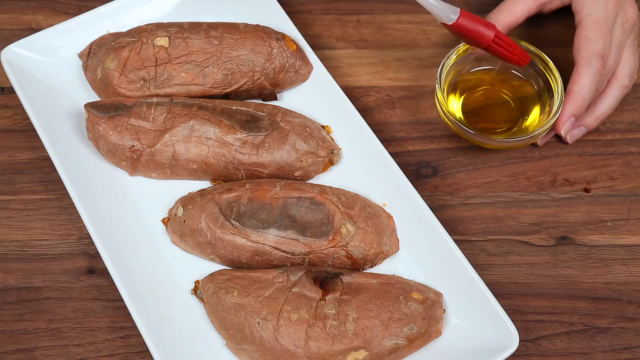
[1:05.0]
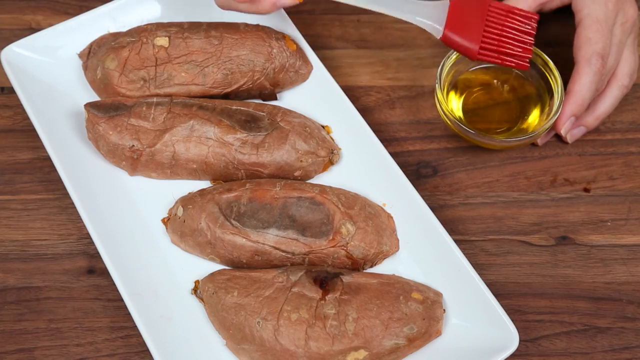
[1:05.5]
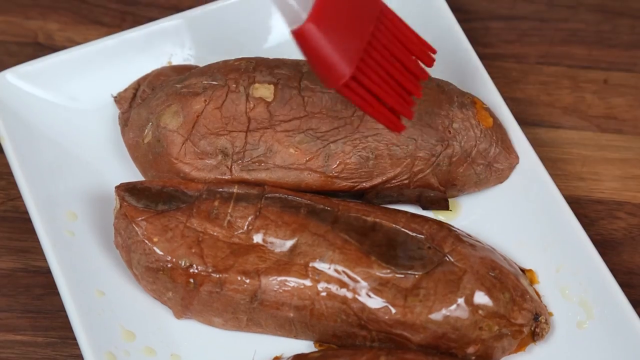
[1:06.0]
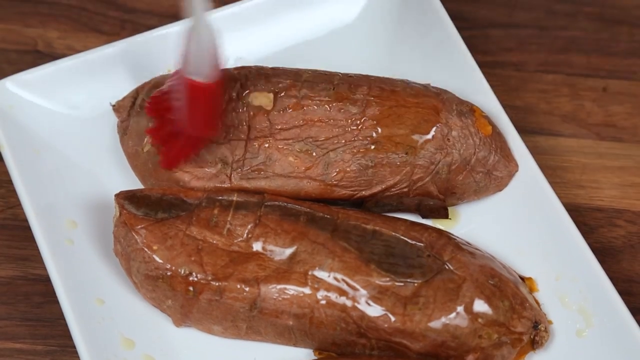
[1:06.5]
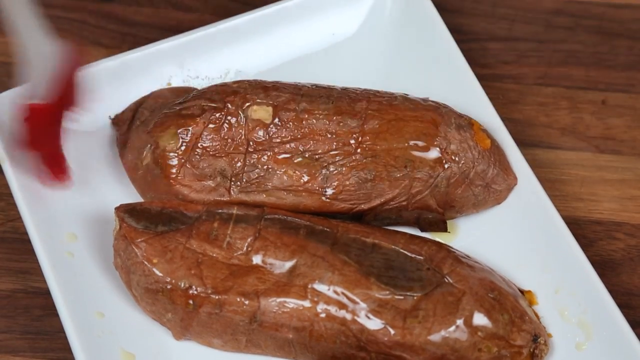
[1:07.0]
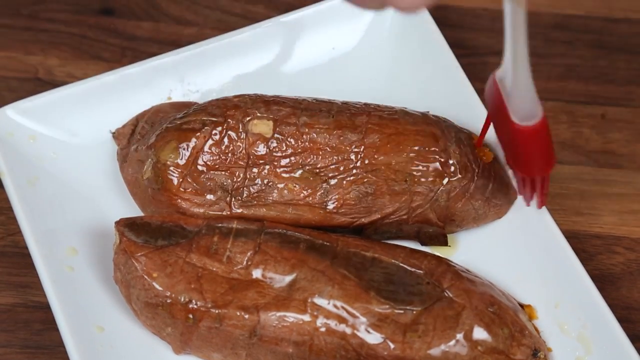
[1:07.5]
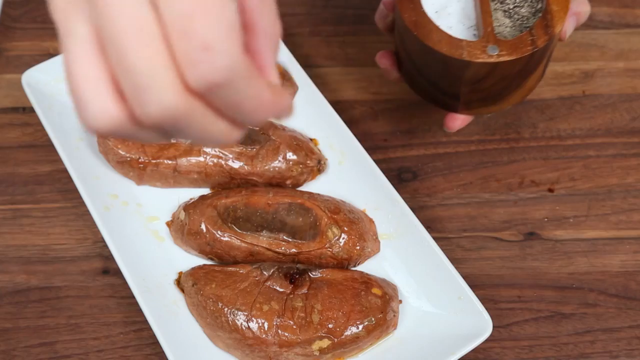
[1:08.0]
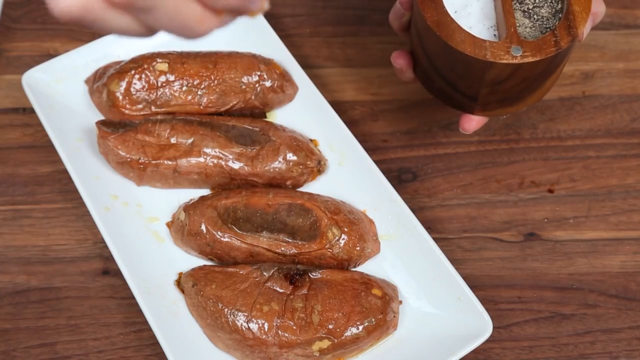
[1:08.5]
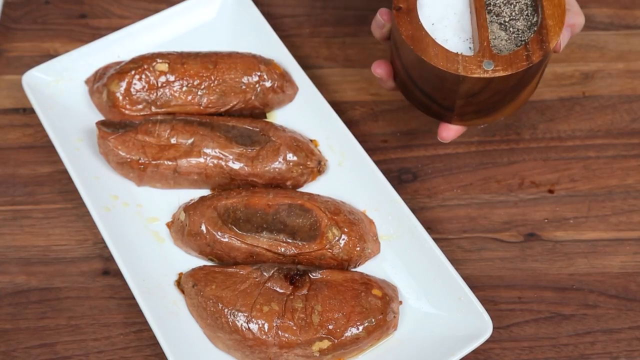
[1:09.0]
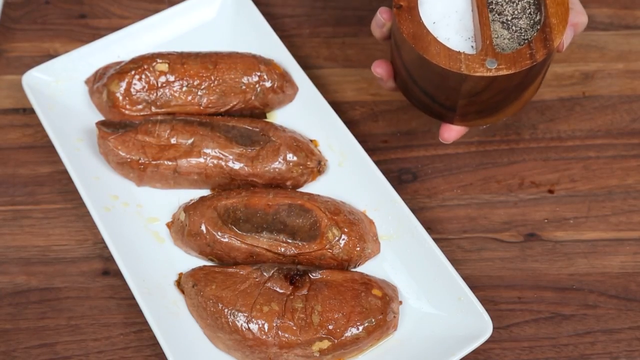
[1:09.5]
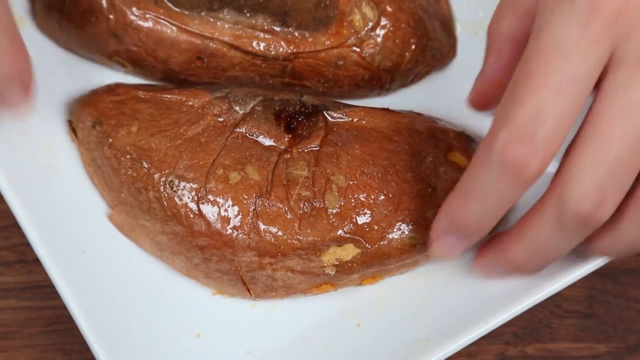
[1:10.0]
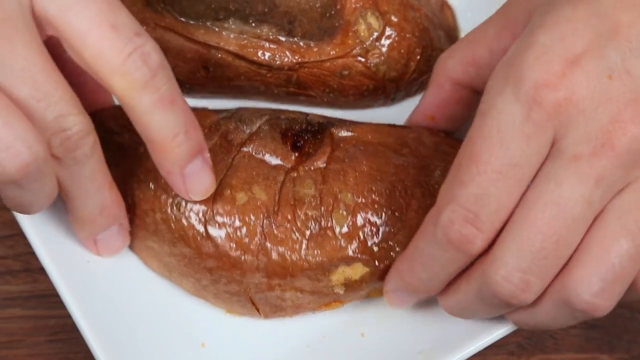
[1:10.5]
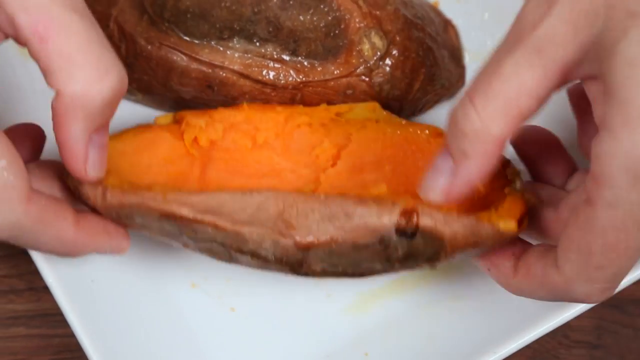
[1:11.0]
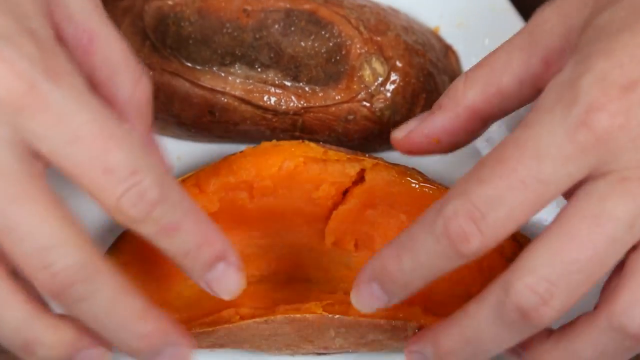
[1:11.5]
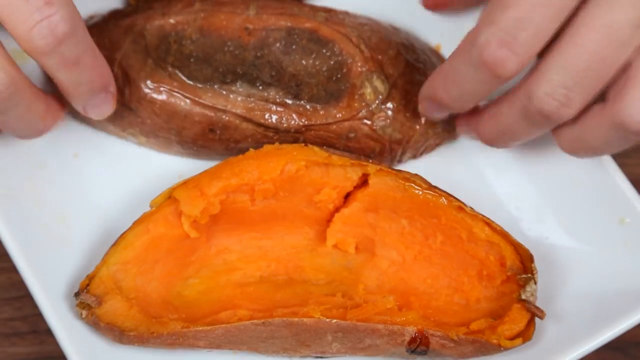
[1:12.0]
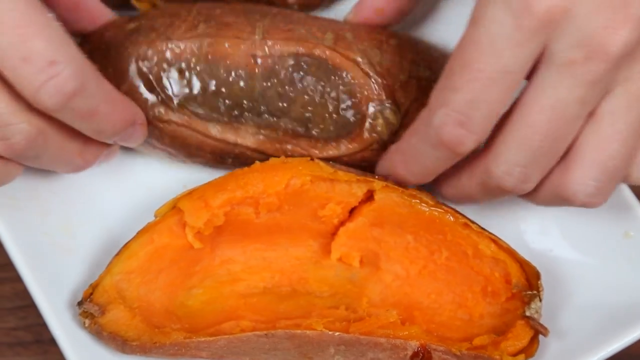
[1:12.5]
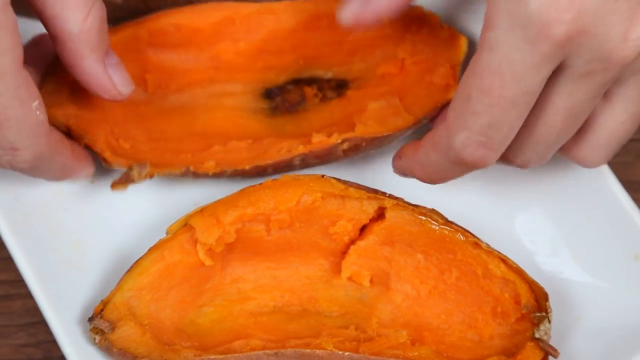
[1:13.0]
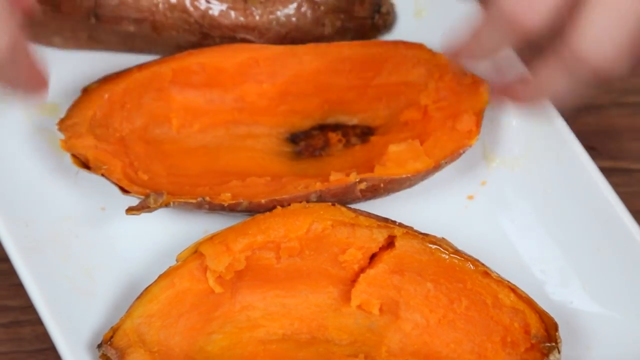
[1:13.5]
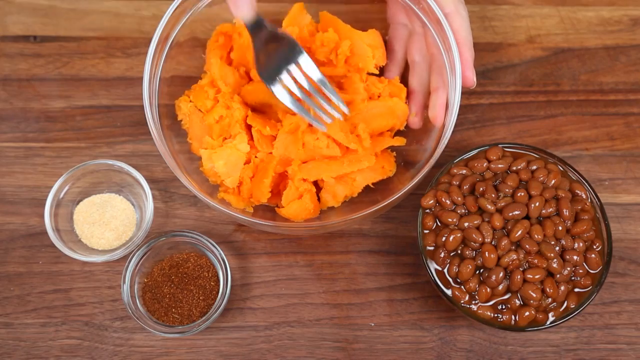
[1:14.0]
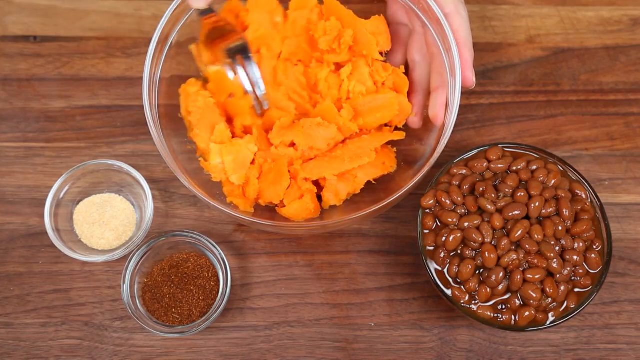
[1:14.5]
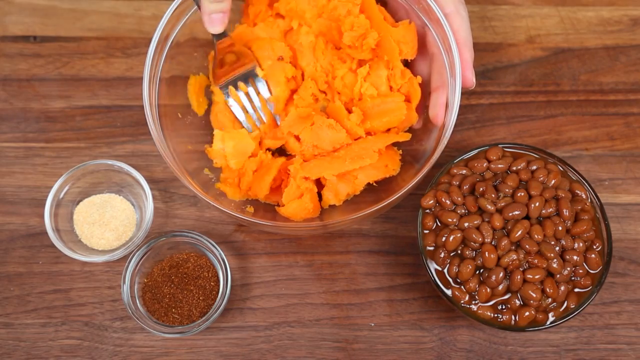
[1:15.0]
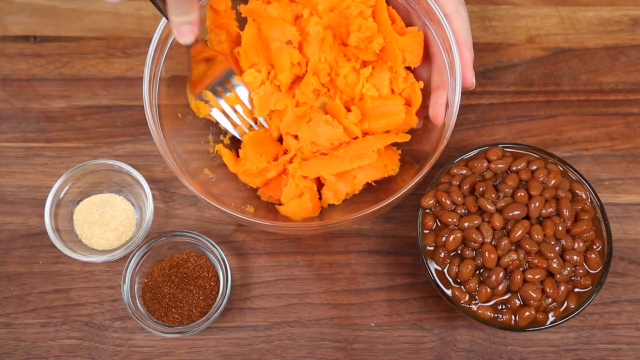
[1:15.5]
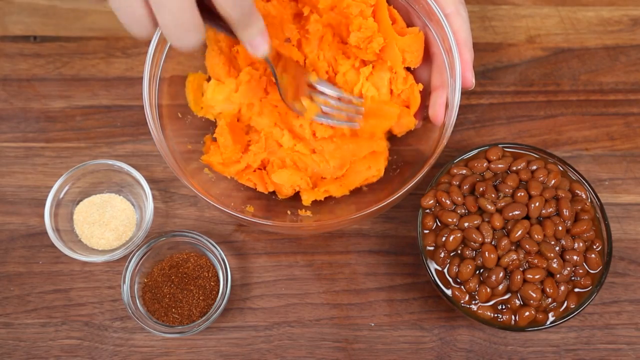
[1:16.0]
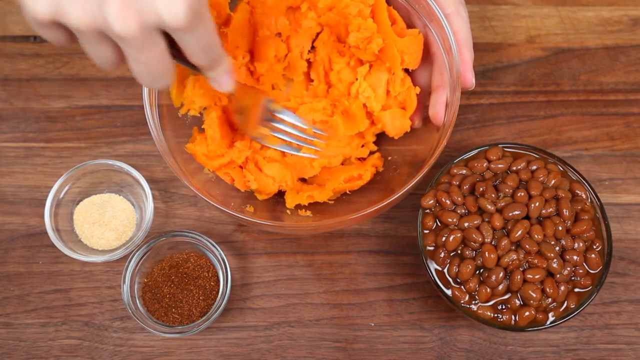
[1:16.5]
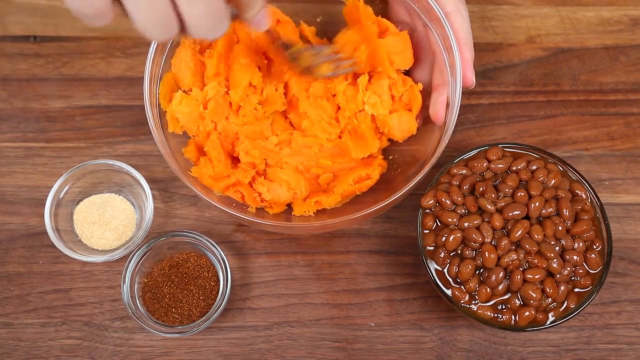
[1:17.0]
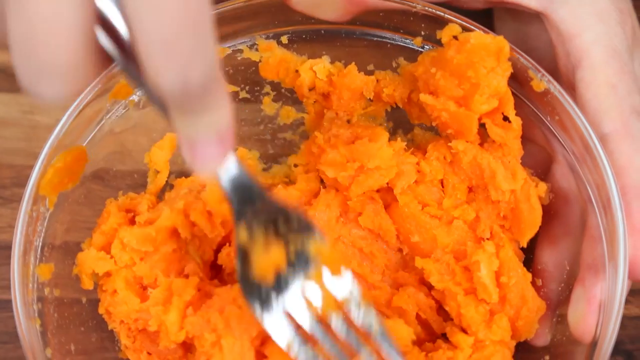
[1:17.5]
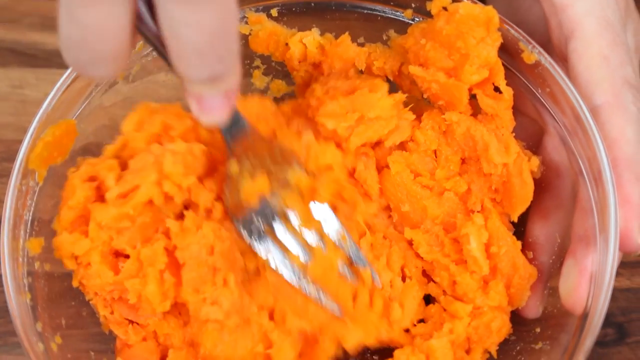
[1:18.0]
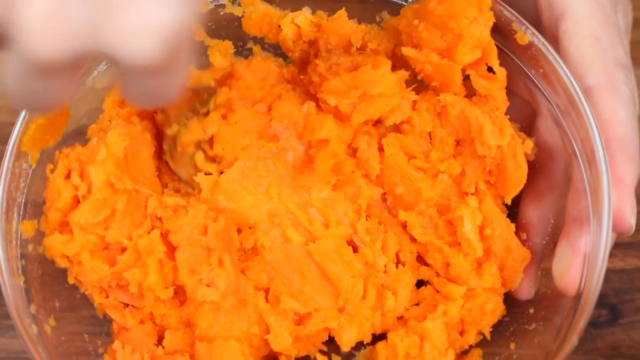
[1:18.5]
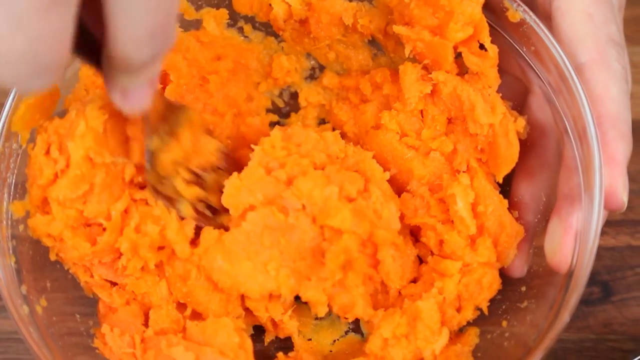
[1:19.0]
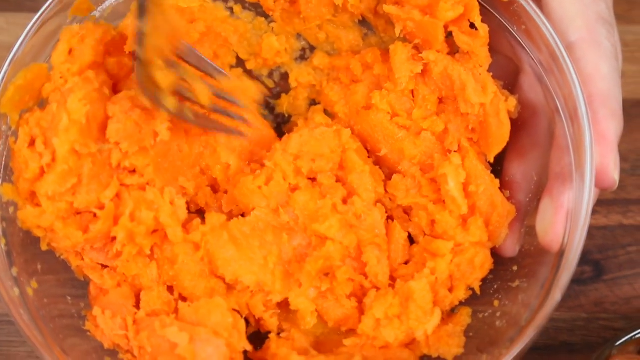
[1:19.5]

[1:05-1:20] The woman appears to be using a cooking paintbrush with a red tip and a white handle, dipping it into a small bowl with some sort of oil. In the middle is a white plate with four sweet potatoes. She appears to coat the first potato on the plate with the oil. Then it cuts to a scene where all the potatoes are coated in oil, and she sprinkles some sort of salt on top of them. She flips one of the potatoes, showing the orange insides, and then flips the second. It cuts to another scene with four bowls on the table: one big bowl with the orange sweet potato insides, one bowl with brown beans, and two small bowls with powders, maybe one garlic and the other paprika. She uses a fork to smash the sweet potato together. The sweet potato is mixed in well, and some parts of it hang on the rims at the top of the bowl.